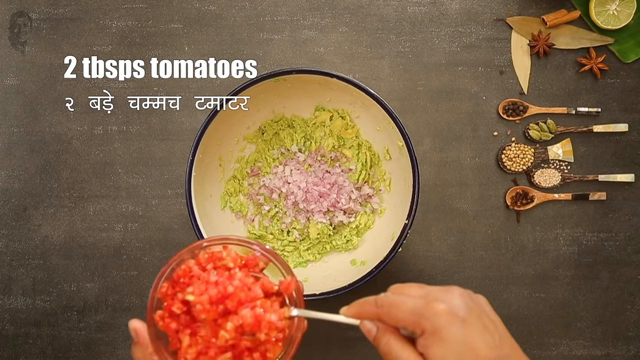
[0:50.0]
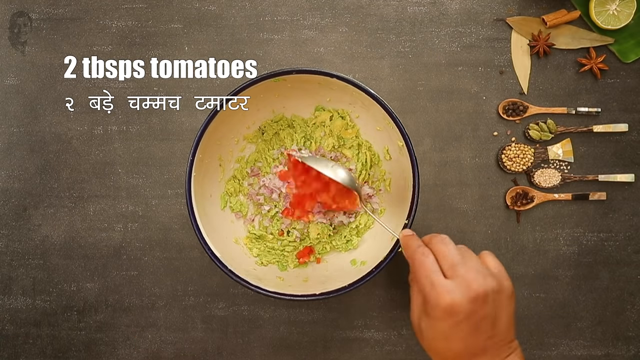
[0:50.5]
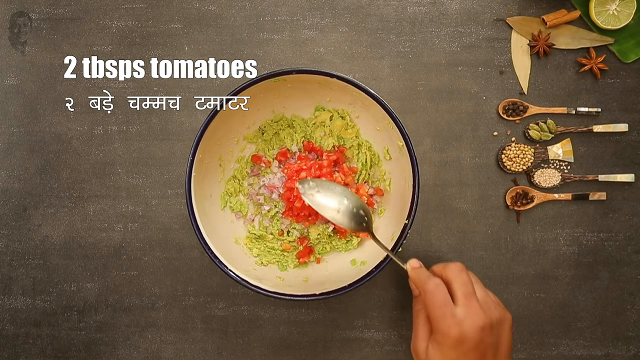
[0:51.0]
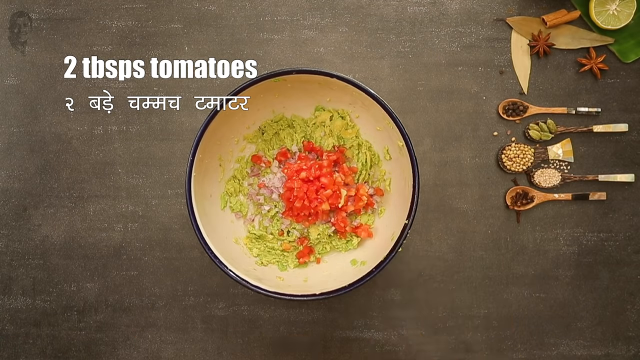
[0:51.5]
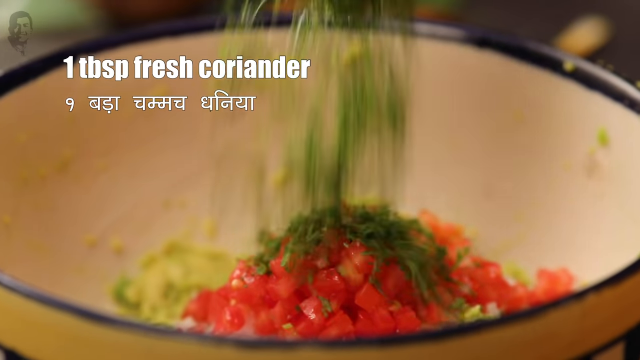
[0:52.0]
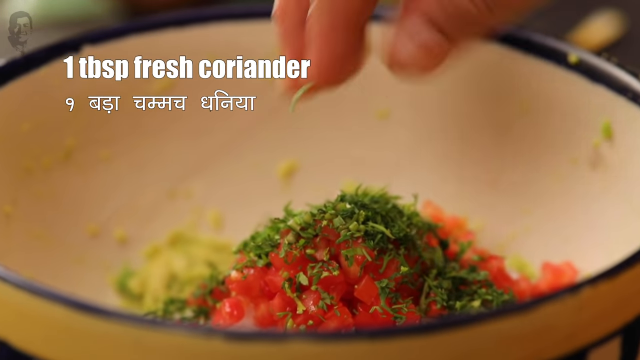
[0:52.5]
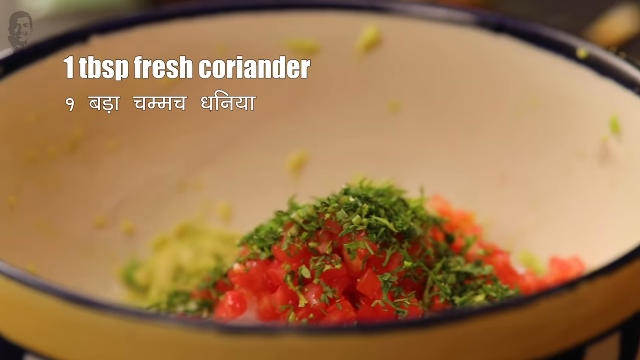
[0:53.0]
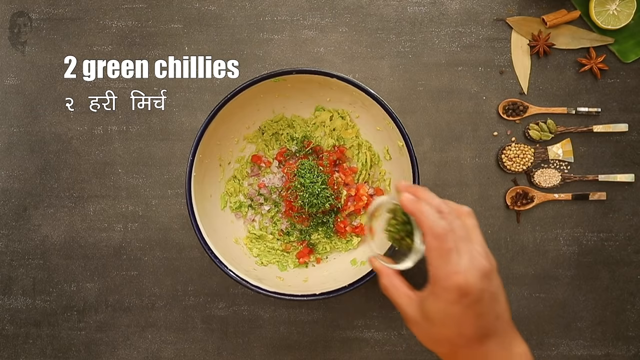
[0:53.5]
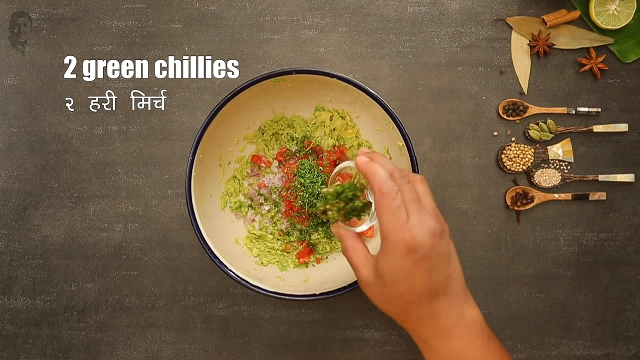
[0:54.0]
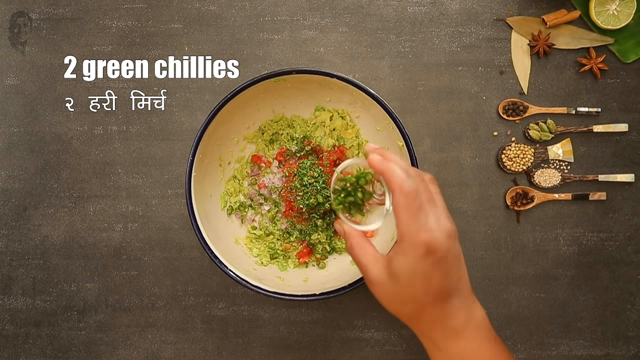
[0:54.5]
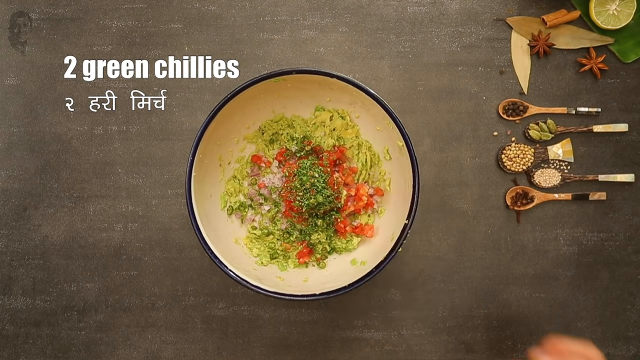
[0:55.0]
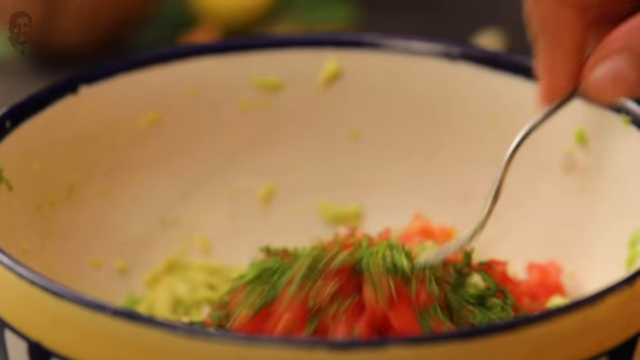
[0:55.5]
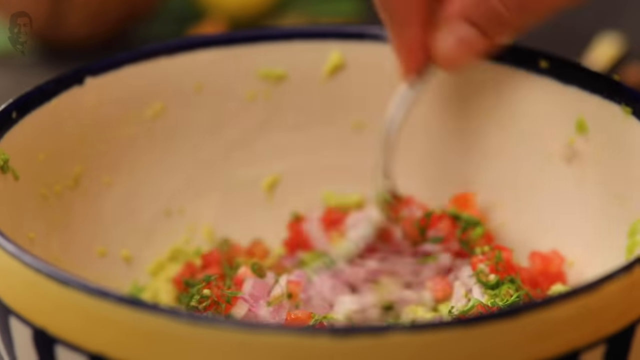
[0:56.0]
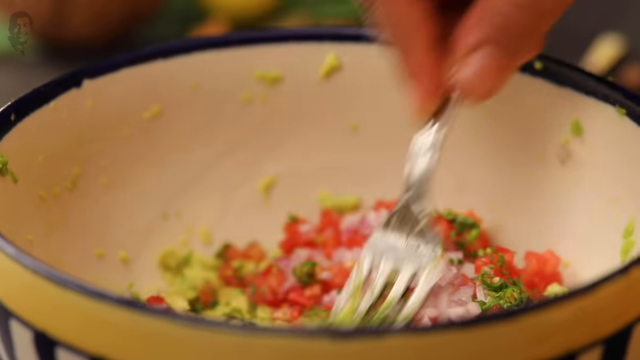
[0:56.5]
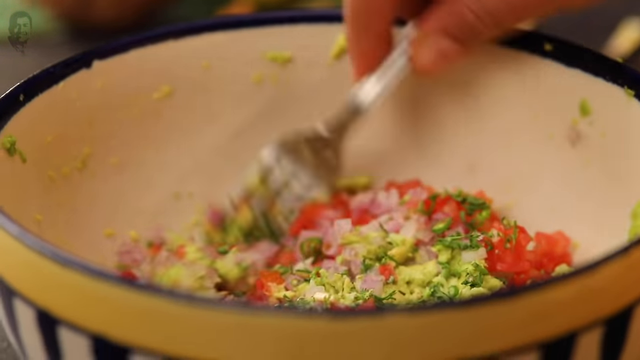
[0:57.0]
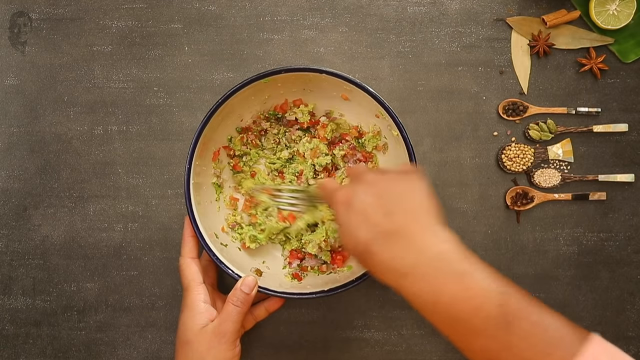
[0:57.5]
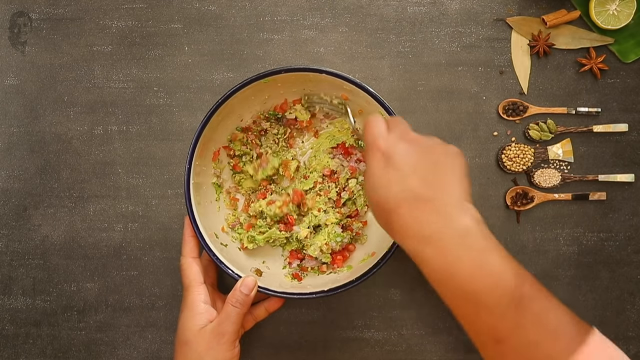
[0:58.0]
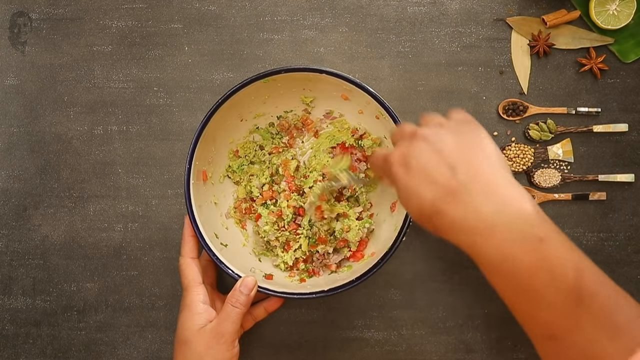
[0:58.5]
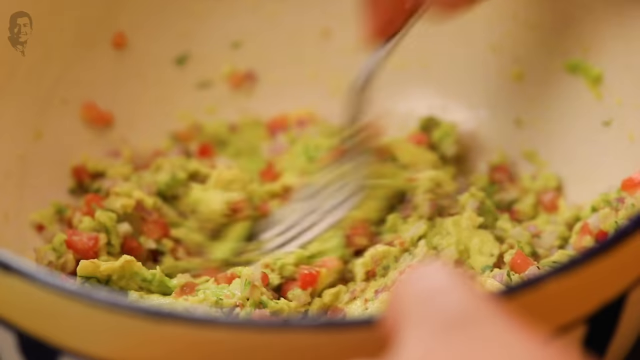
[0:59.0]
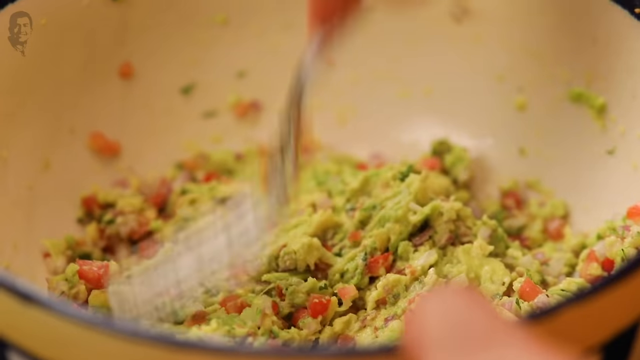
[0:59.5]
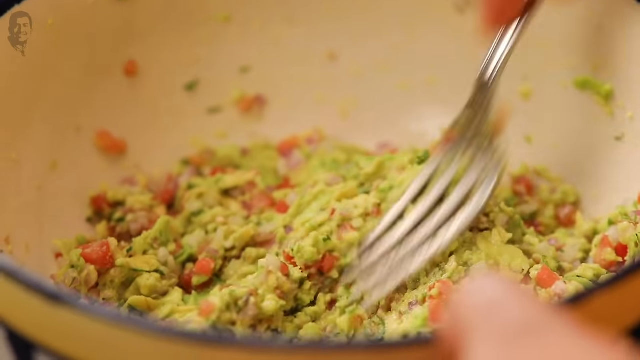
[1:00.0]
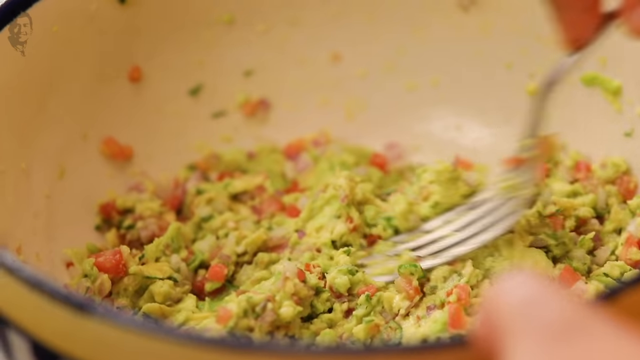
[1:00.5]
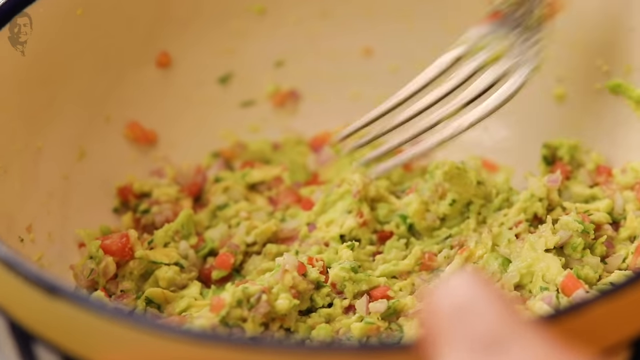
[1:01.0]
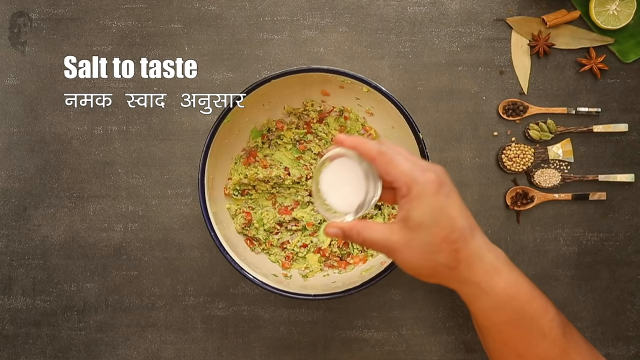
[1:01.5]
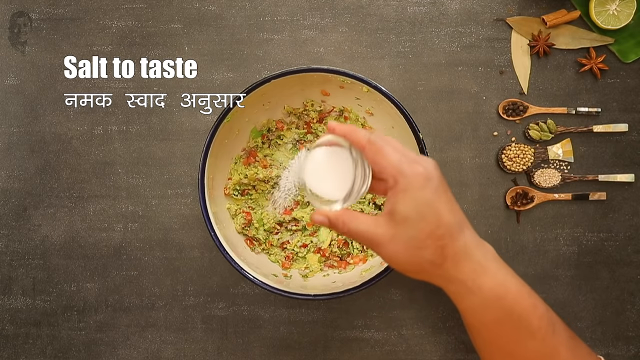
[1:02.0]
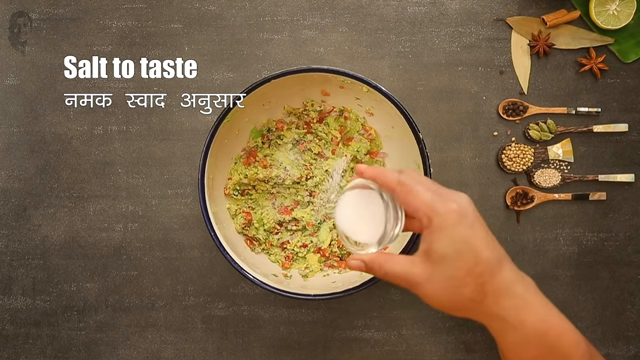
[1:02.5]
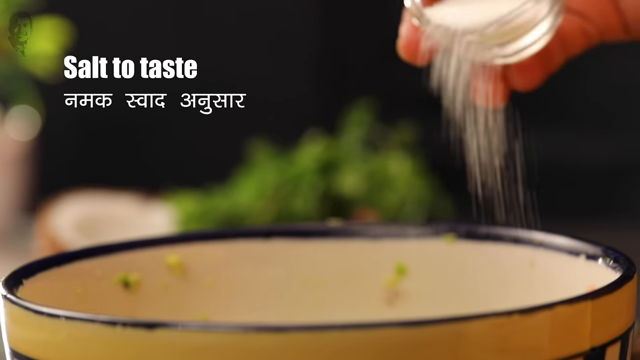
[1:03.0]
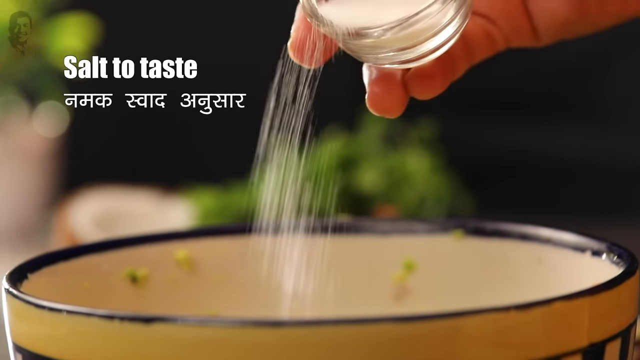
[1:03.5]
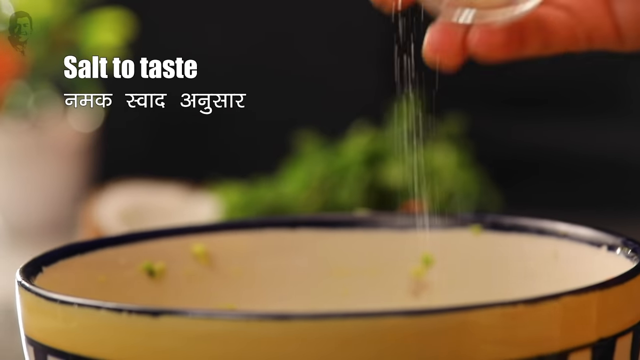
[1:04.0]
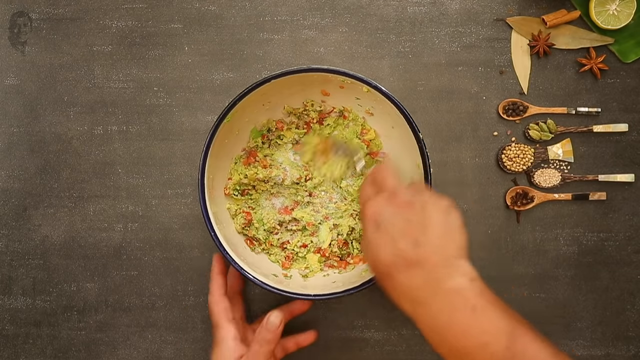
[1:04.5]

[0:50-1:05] The video appears to go back to the beginning of the Cheesy Avocado Sandwich: two avocados are cut in half, the top is taken off, the knife is put into the pit and the pit is pulled out. The avocado is scooped out into a white bowl with a blue line around it. The woman presses the avocado down with a fork into a very smooth paste and makes lines in it with the fork. She squeezes in lemon or lime juice, along with red peppers, maybe some orange tomatoes, and some kind of green herb. She adds salt and another unidentified green herb, then mixes it all together with a spoon, adding a little more herbs as she mixes.